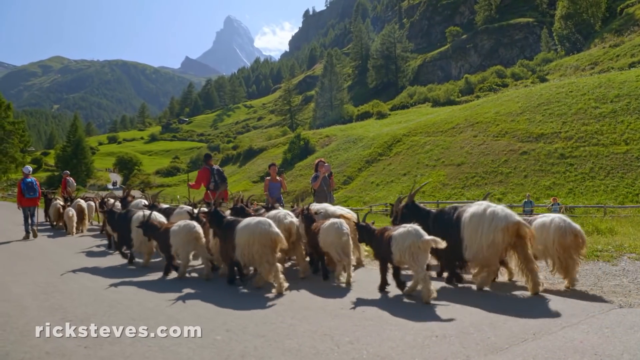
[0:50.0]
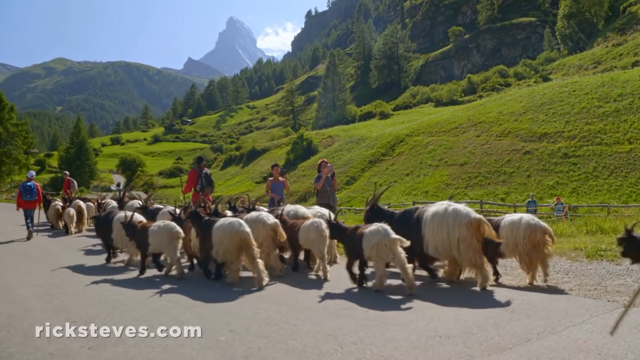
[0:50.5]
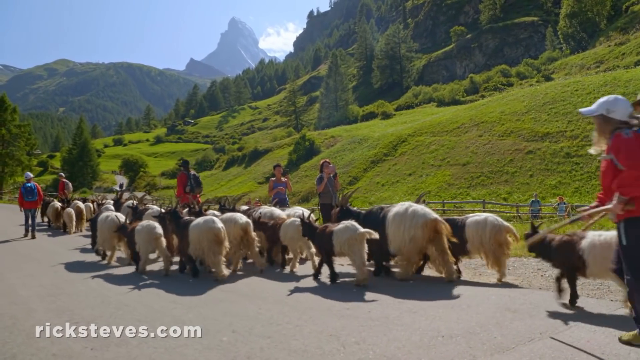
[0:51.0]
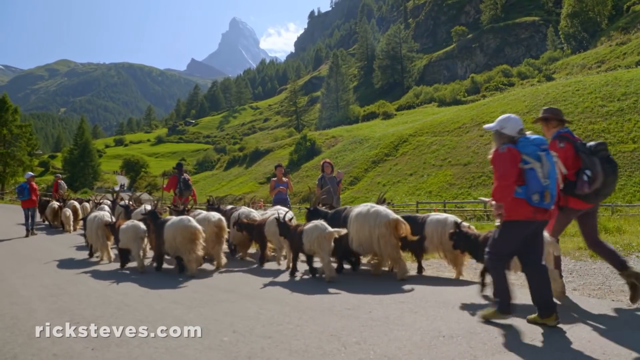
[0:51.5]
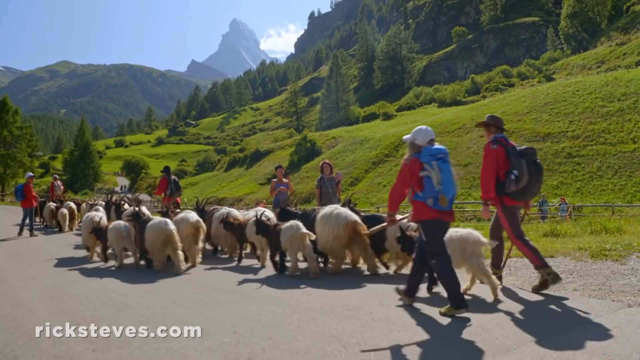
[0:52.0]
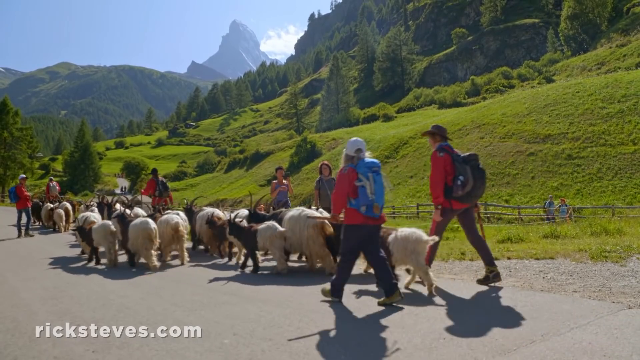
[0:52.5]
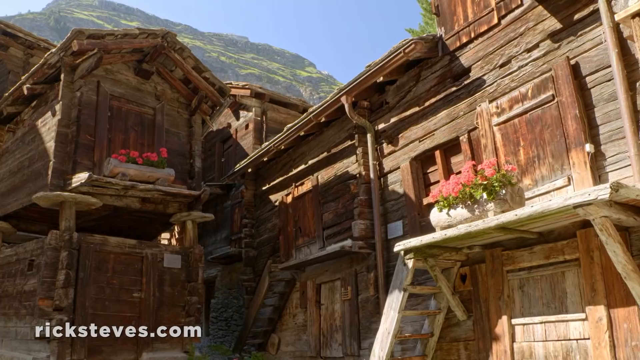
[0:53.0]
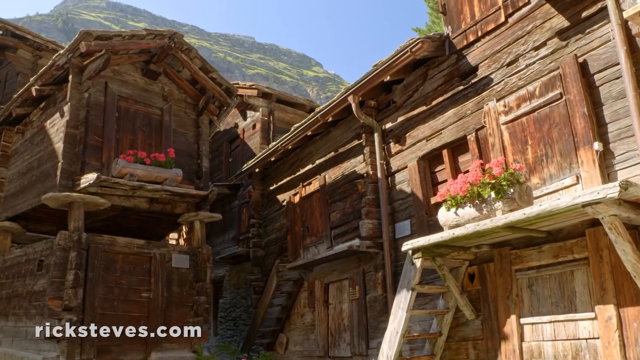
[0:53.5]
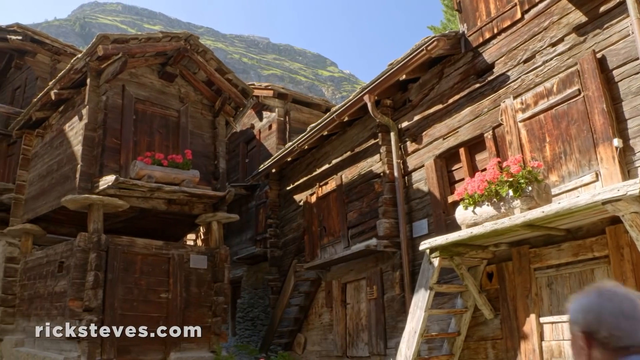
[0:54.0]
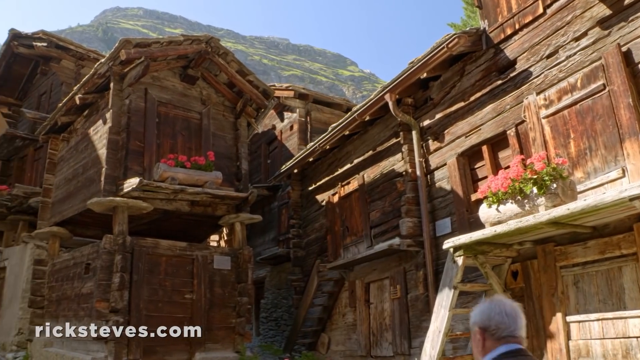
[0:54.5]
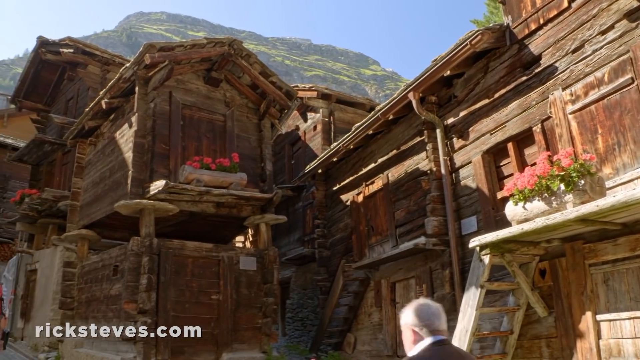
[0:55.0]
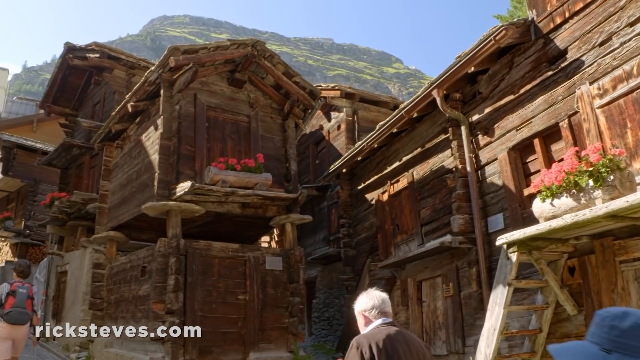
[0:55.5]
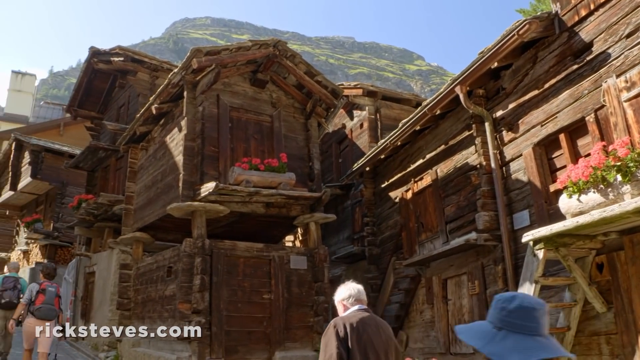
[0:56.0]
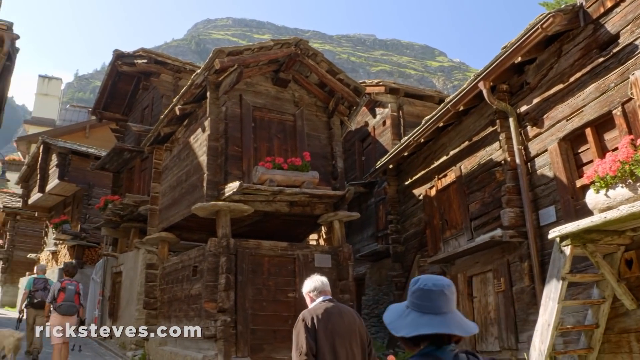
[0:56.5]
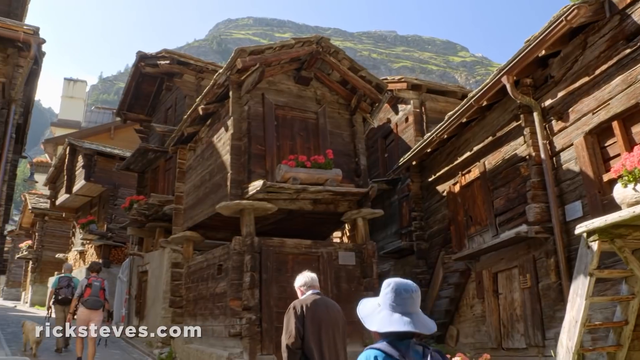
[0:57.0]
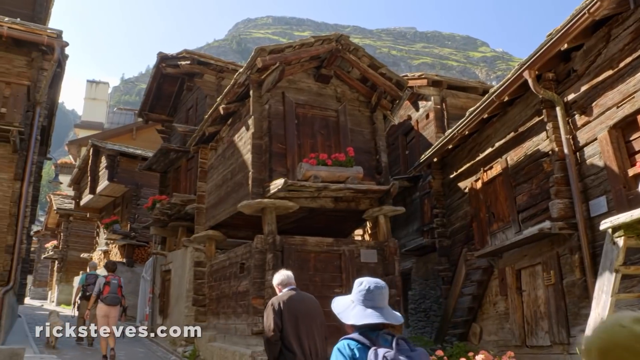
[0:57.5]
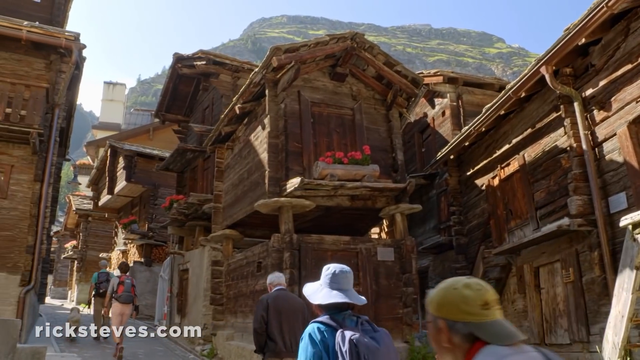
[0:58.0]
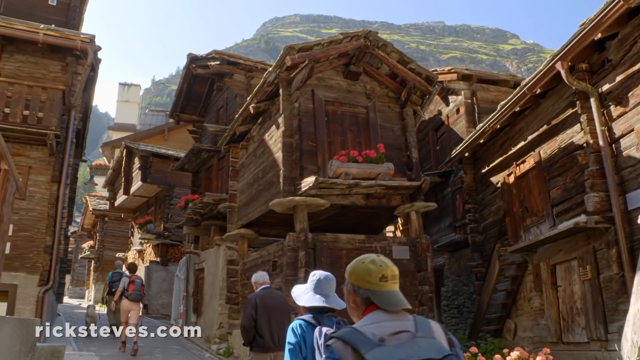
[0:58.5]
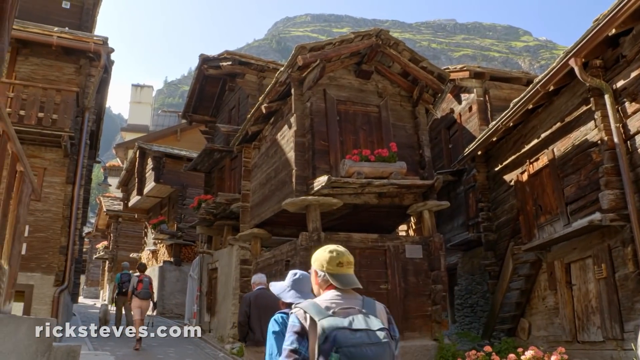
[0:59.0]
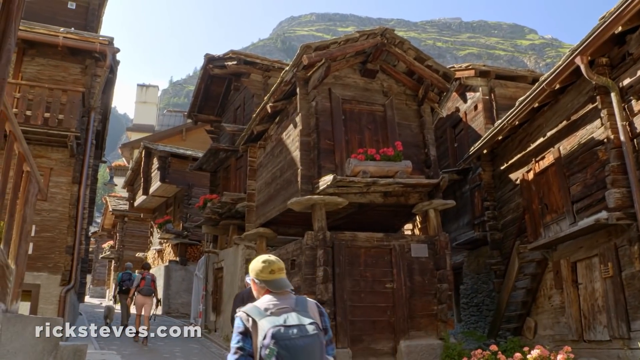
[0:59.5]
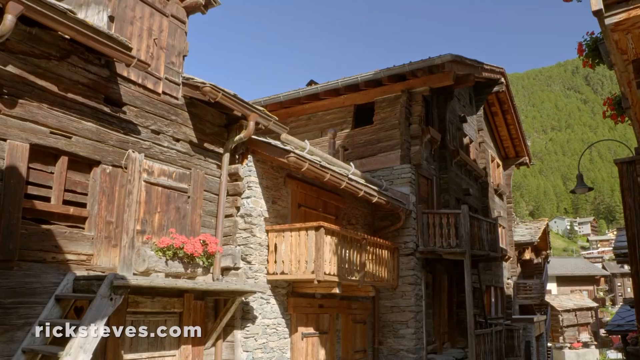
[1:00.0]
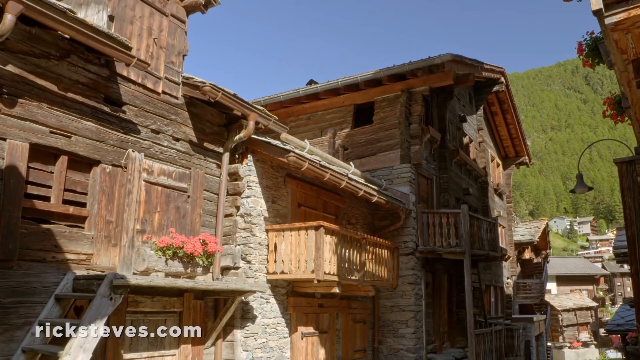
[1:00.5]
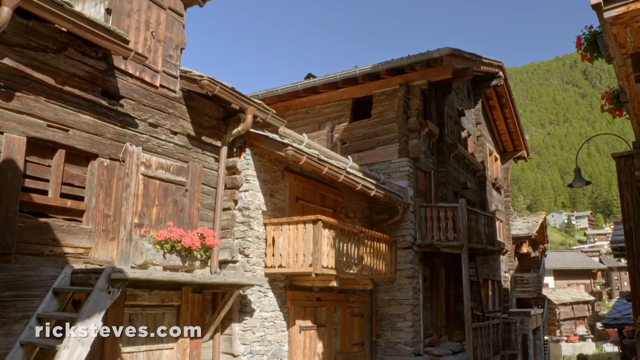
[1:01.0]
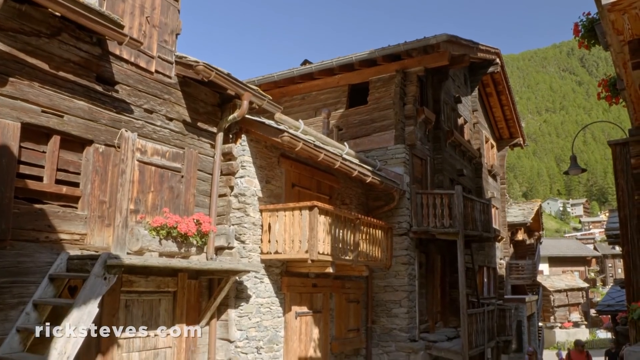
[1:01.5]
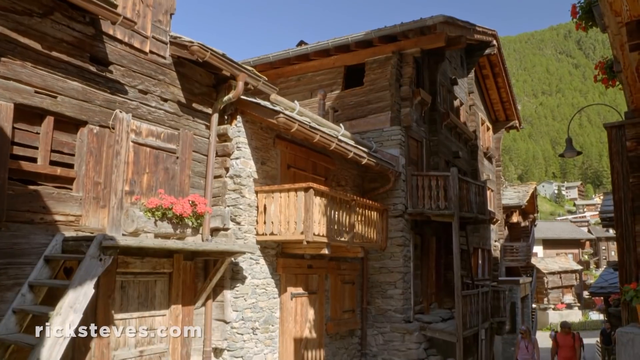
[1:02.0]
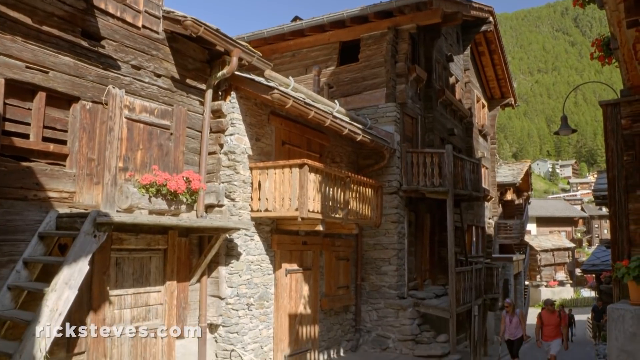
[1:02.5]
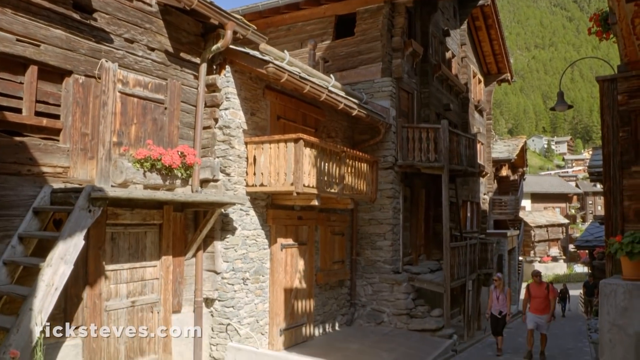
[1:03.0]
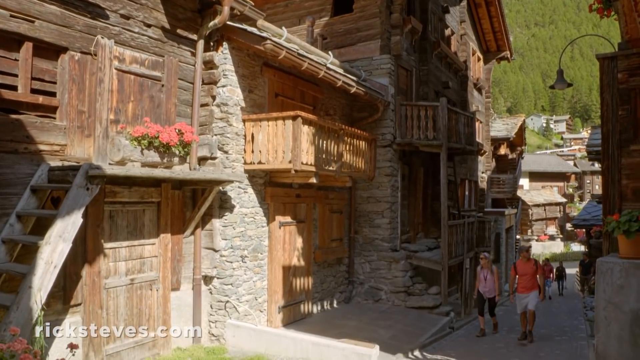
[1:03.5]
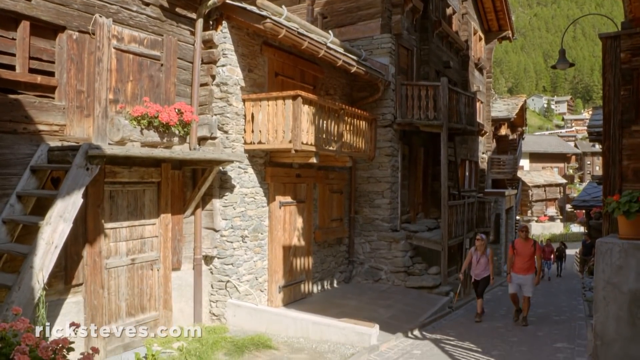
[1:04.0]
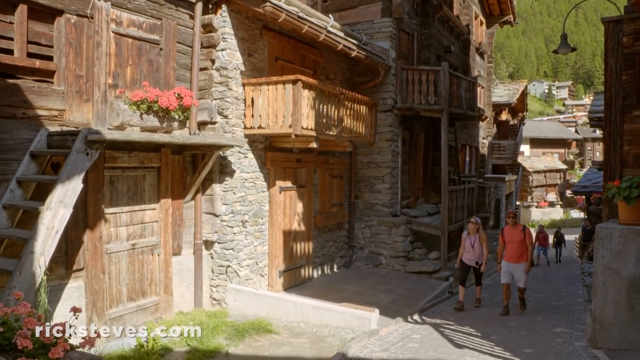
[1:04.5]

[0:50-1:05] The video is about Zermatt, Switzerland, finding charm in the Swiss Alps. The herd of goats, having walked through the city, heads down the road toward another pasture, with people following. About four or five goat herders walk with them, all in red shirts and backpacks and carrying sticks to direct the goats. The video then moves to old wooden structures like old houses, with pink flowers on their balconies and bottom parts made of stone, giving an almost log-cabin look. People walk uphill past the houses, looking up at how they are built. The houses have a bottom part and a top part and look to be two stories; they all seem to be connected, maybe four or five in a row.